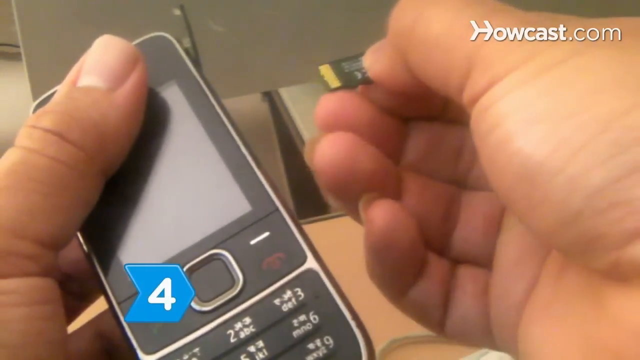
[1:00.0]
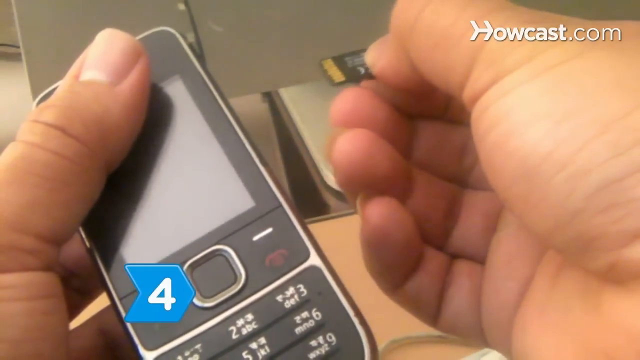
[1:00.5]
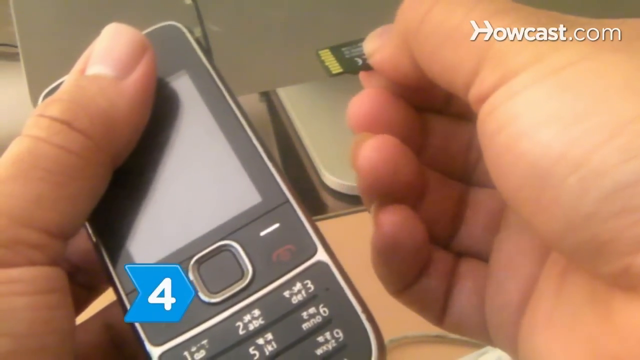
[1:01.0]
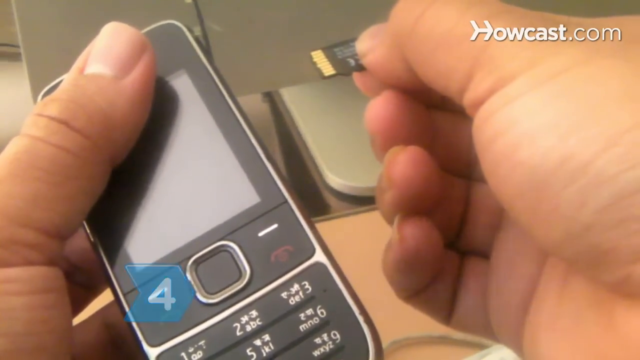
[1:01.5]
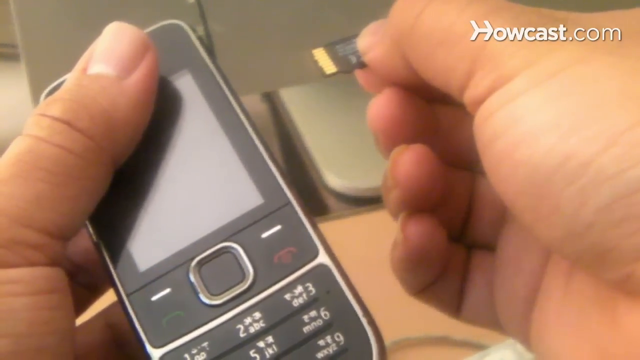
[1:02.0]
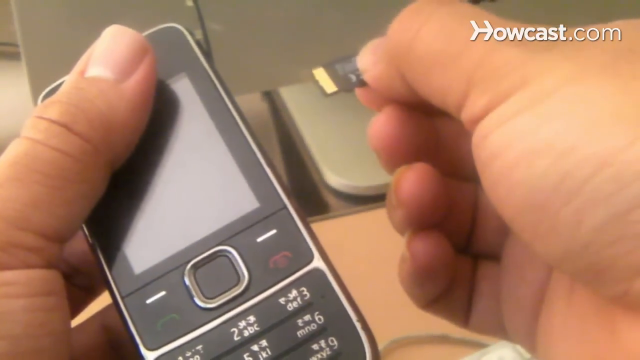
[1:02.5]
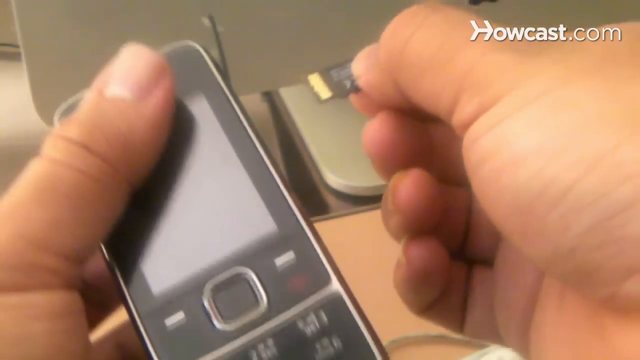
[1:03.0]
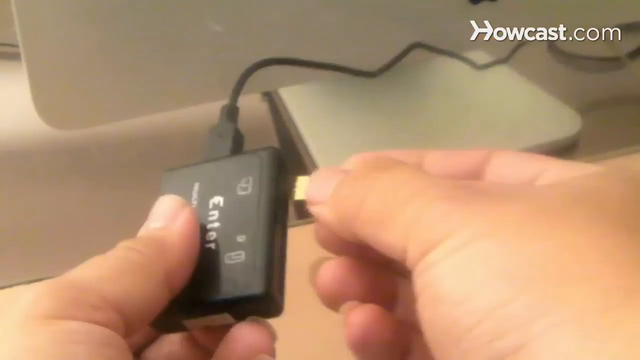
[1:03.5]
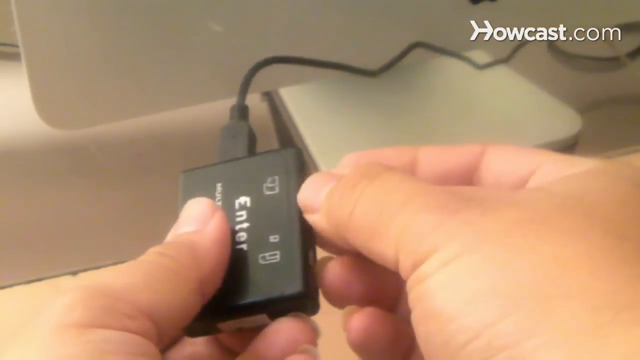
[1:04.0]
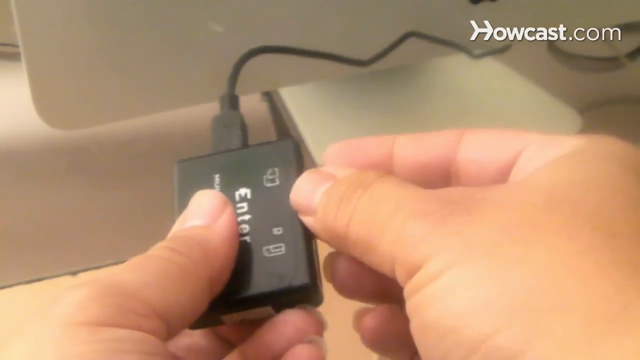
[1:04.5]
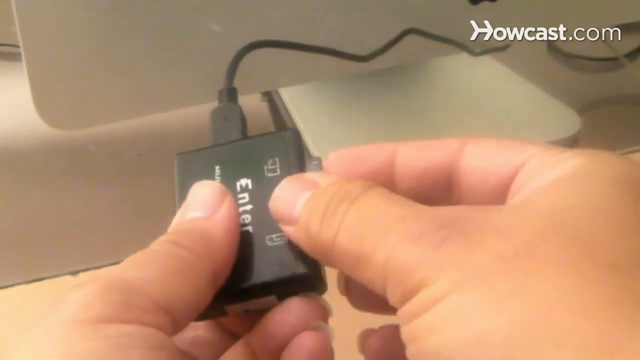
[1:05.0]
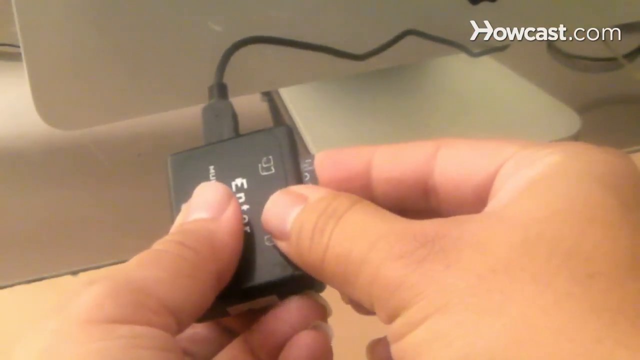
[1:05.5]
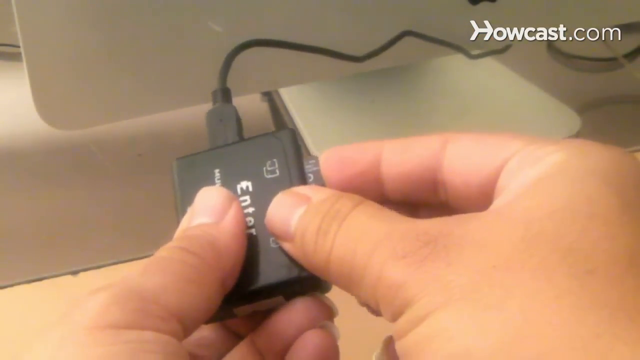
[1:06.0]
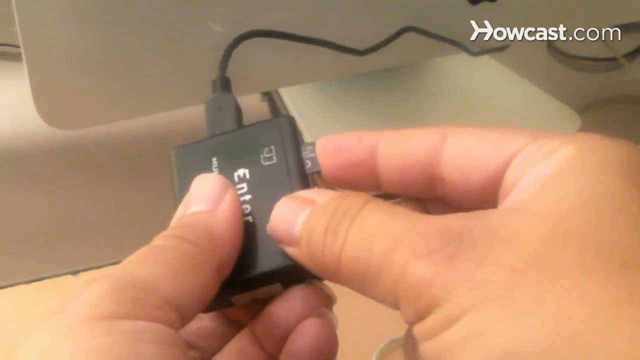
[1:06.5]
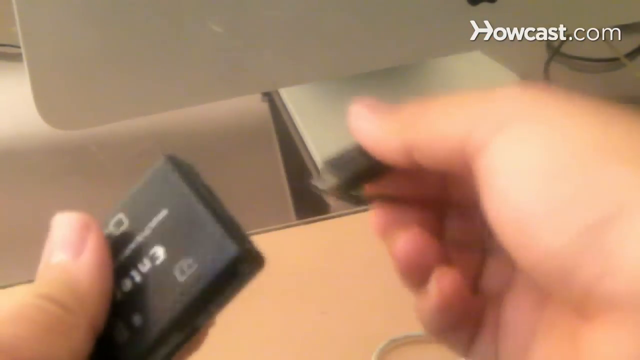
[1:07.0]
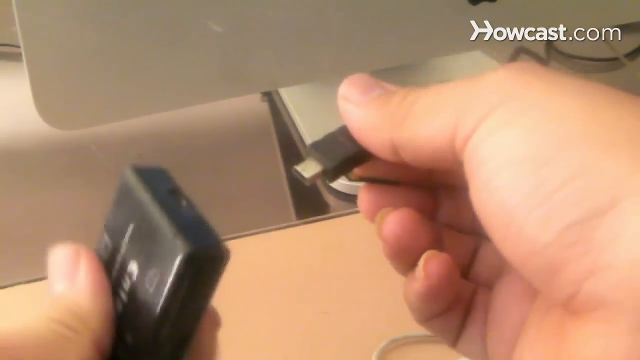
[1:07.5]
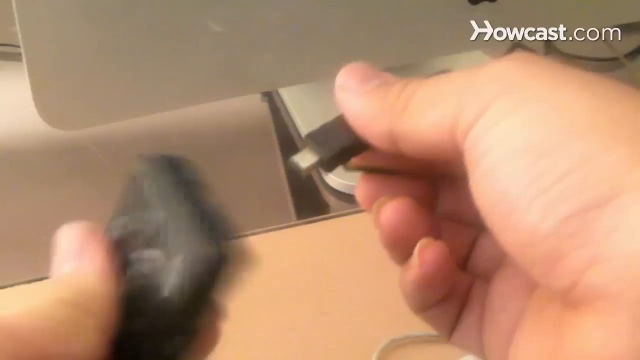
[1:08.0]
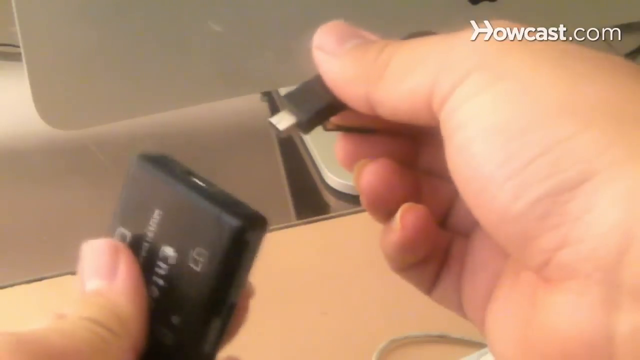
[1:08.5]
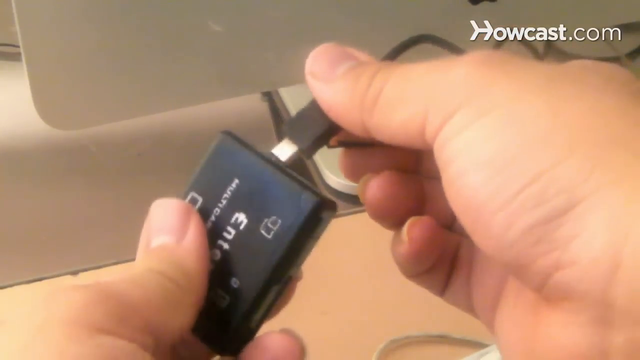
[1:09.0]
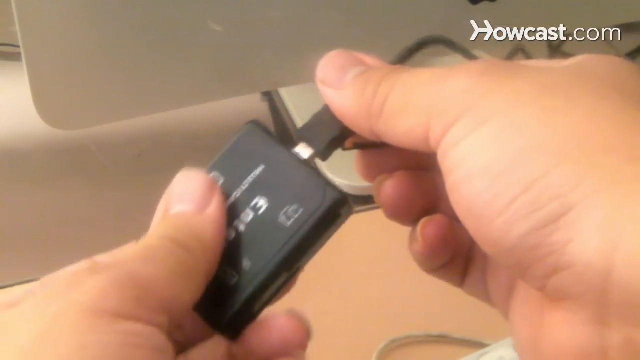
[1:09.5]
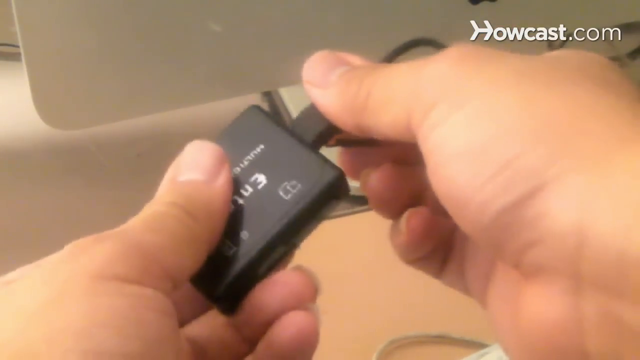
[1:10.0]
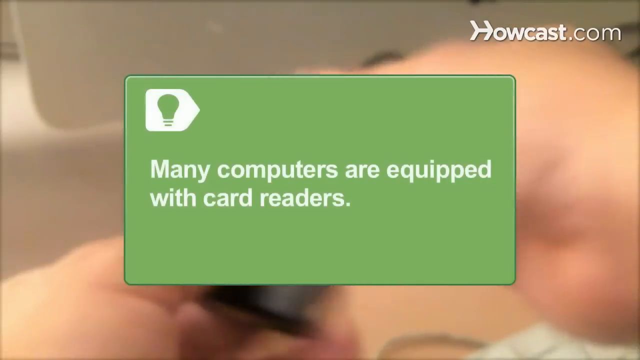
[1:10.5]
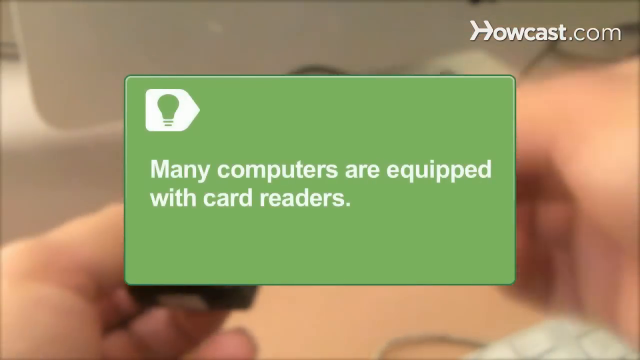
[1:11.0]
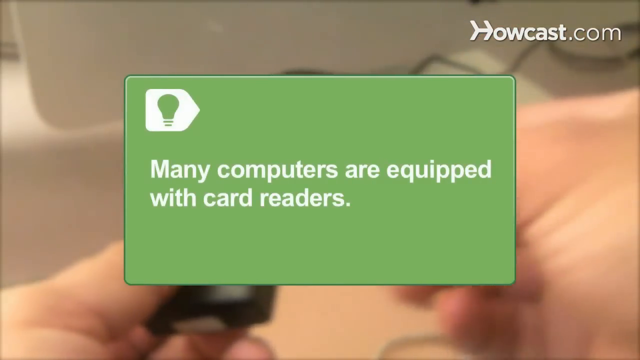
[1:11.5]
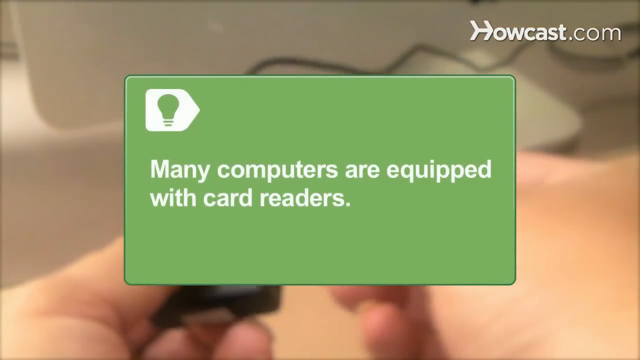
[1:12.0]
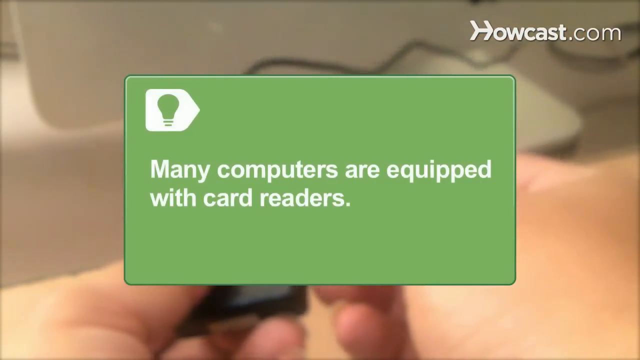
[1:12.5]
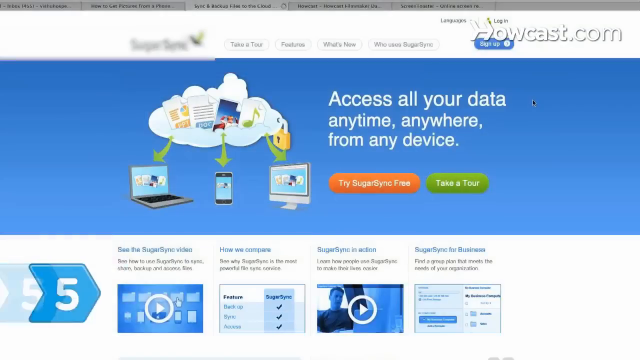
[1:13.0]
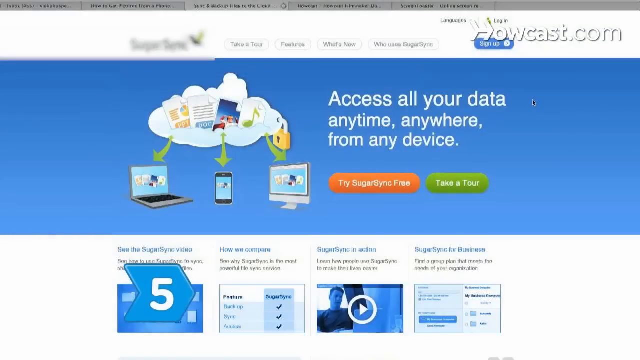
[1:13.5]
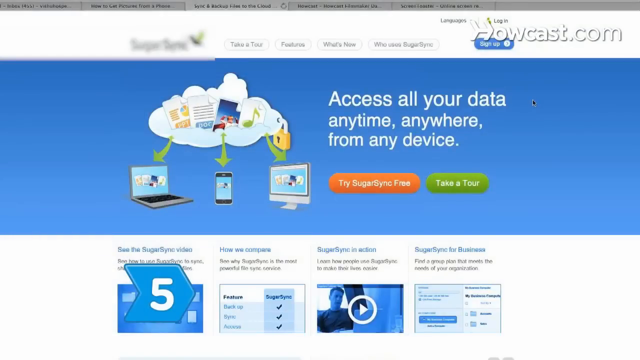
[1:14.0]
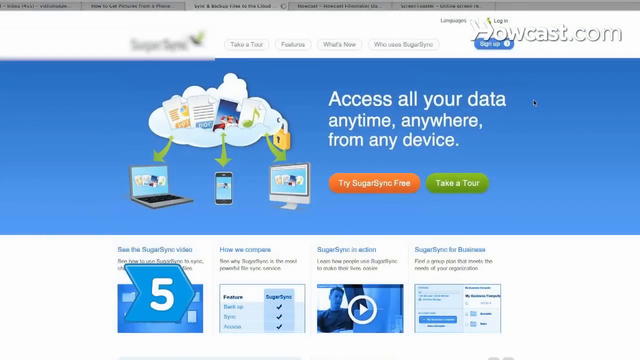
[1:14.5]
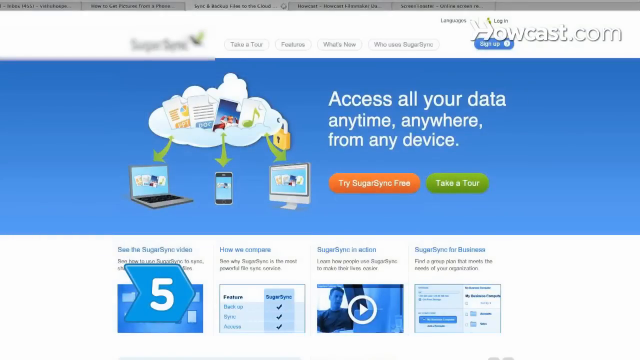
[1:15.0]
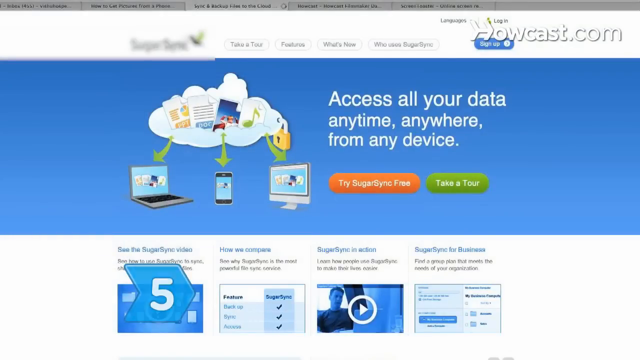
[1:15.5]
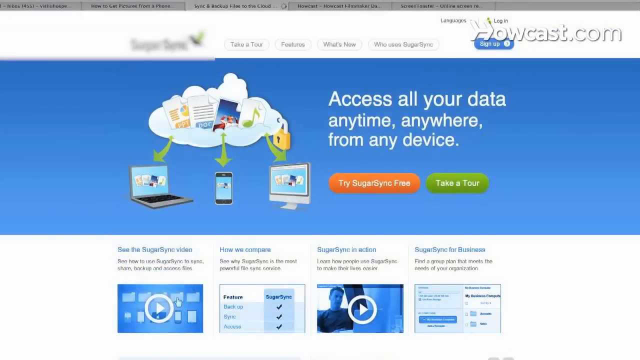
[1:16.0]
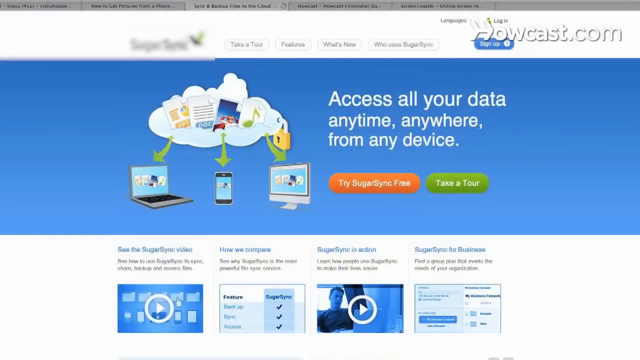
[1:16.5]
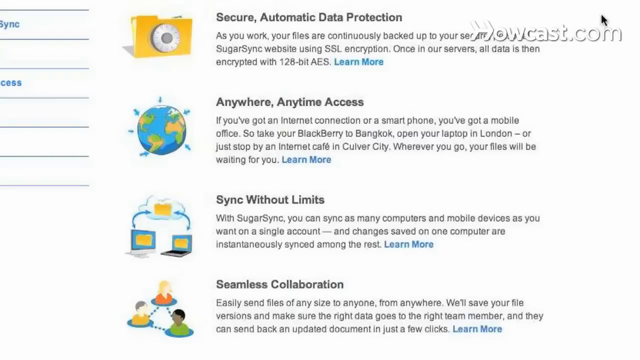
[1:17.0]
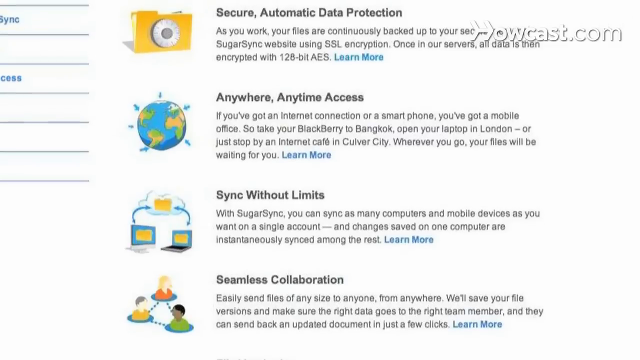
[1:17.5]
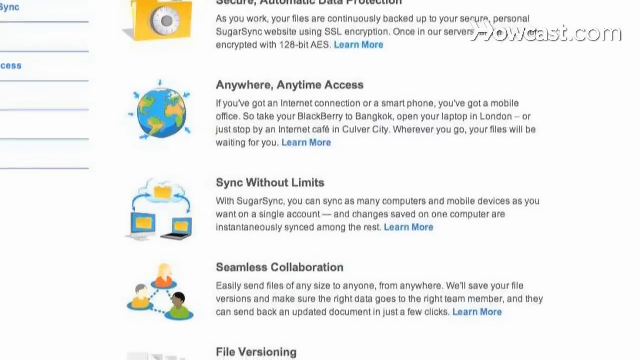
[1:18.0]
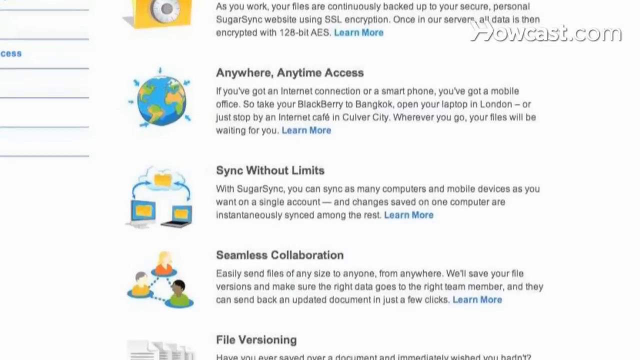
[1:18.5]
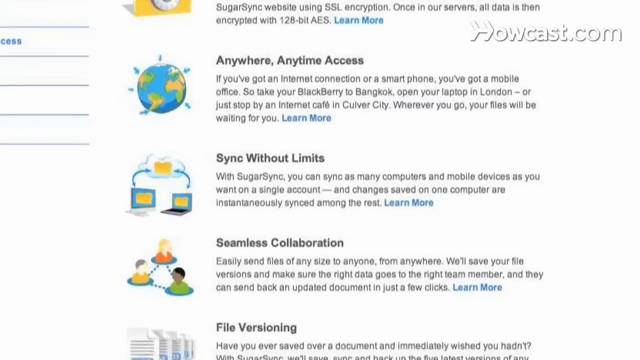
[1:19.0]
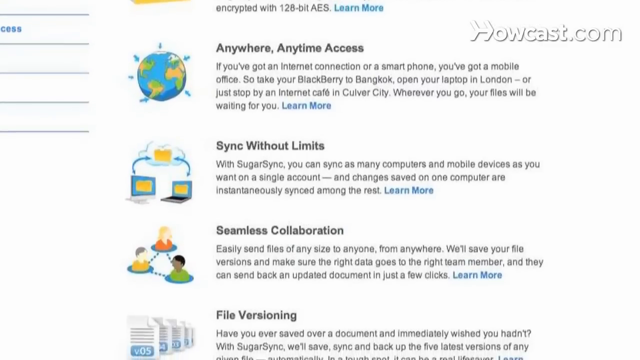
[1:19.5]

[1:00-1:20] The user takes the data card out of the phone, showing where it is: a little compartment on the side of the phone. The data card is put into some sort of adapter, which is then connected by cable to the computer. A green note suddenly appears indicating that some computers already have card readers, so the adapter may not be necessary. The user then shows a web page that is blurred so its name cannot be read; it seems to be one of several backup options for uploading images from the phone to a cloud kind of database.